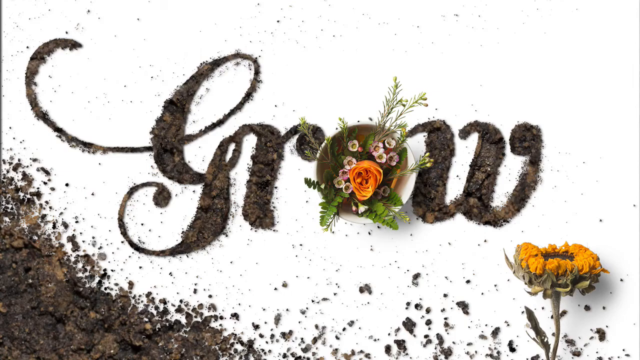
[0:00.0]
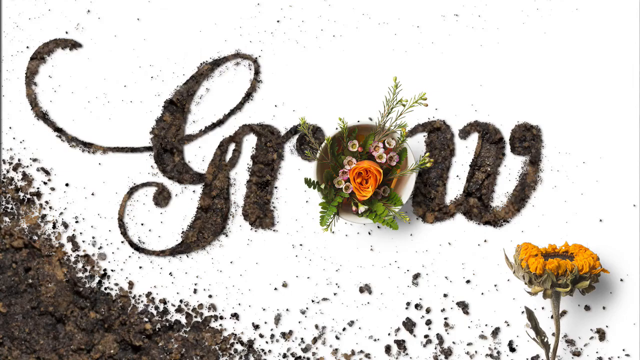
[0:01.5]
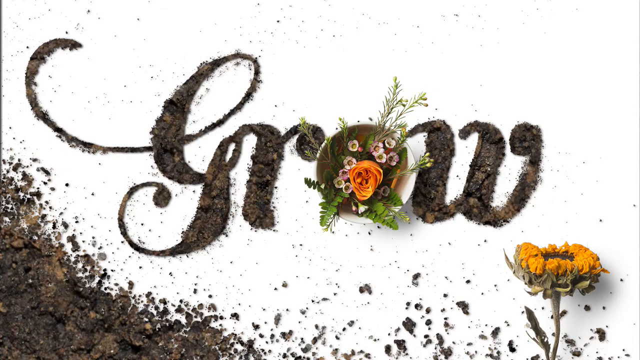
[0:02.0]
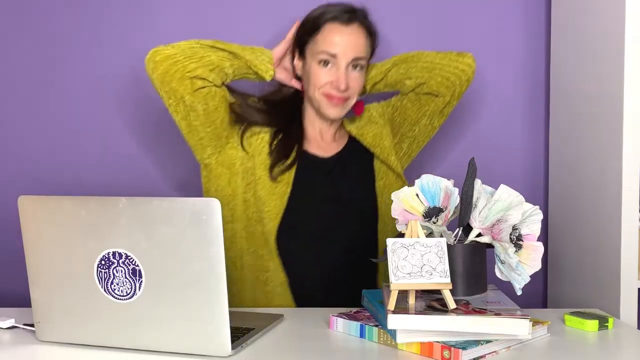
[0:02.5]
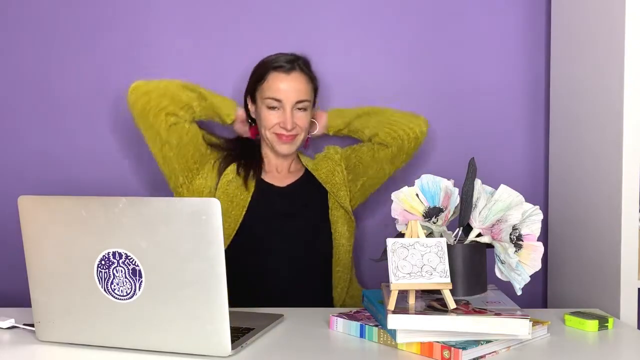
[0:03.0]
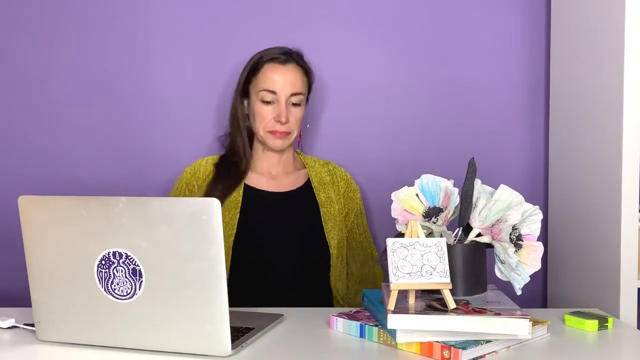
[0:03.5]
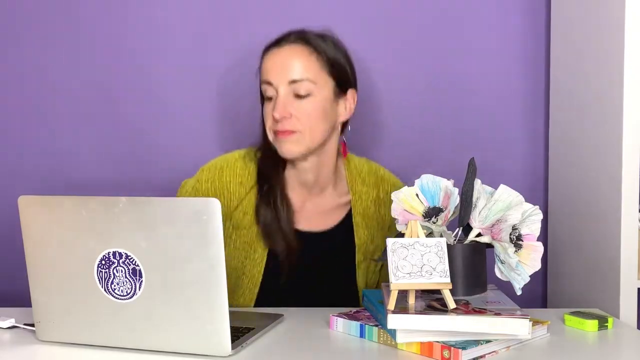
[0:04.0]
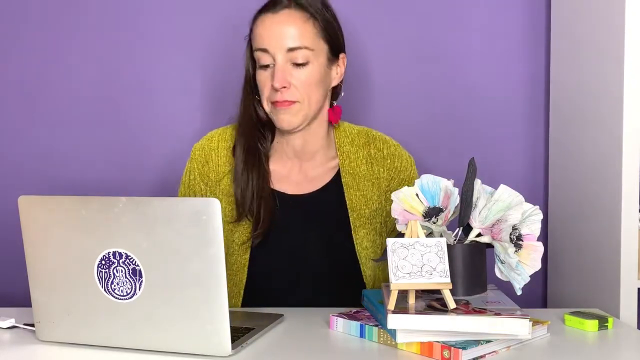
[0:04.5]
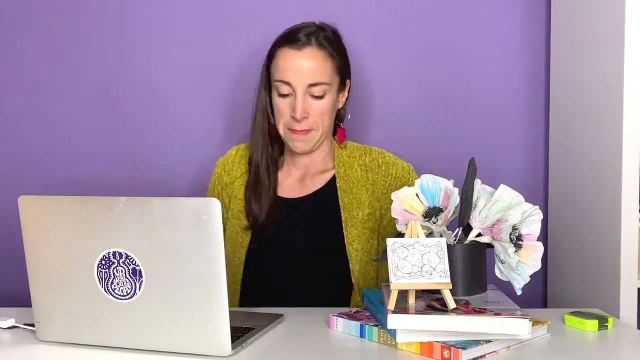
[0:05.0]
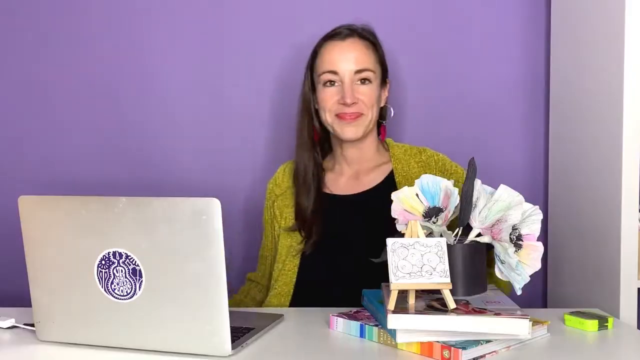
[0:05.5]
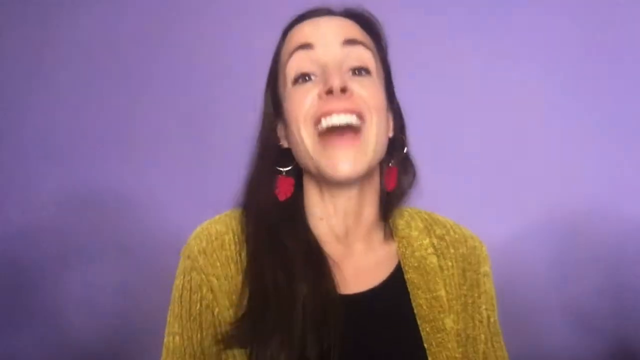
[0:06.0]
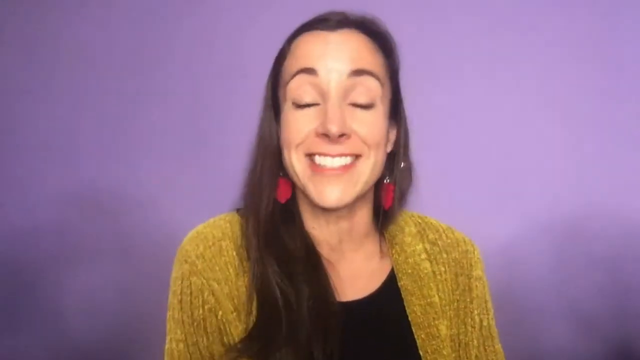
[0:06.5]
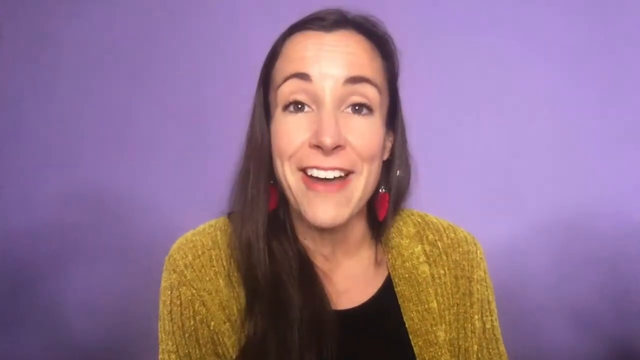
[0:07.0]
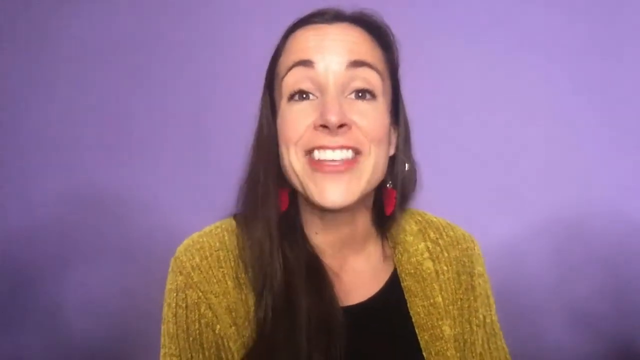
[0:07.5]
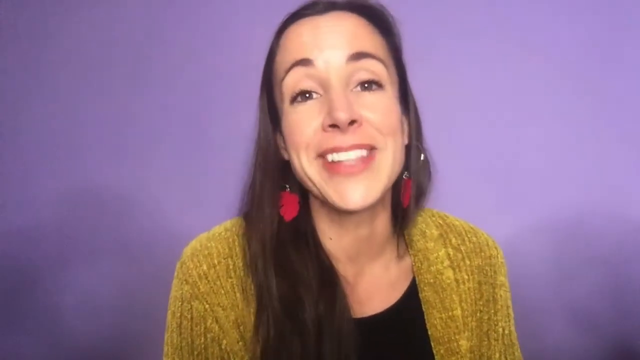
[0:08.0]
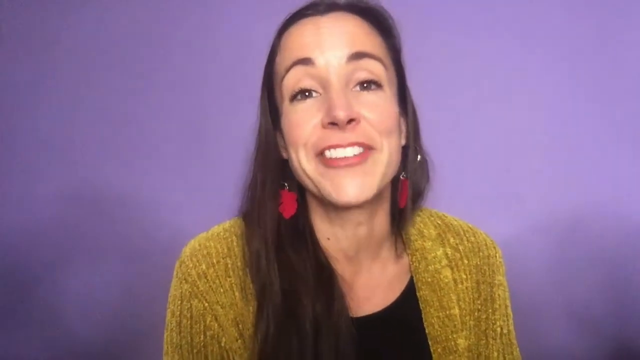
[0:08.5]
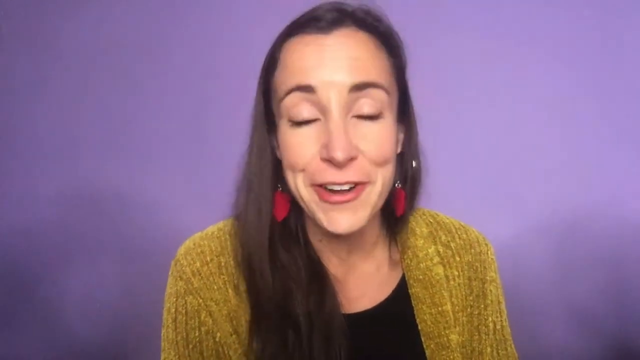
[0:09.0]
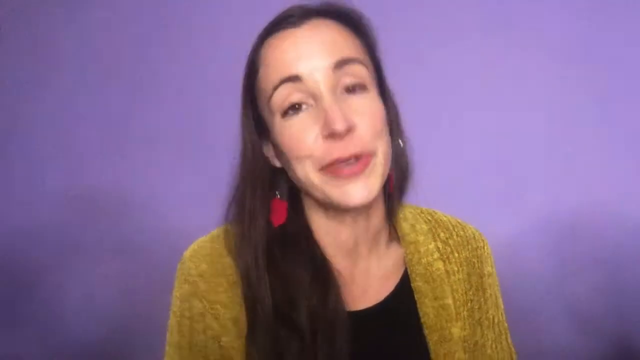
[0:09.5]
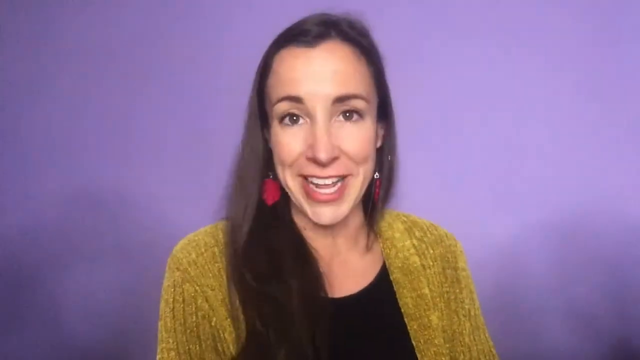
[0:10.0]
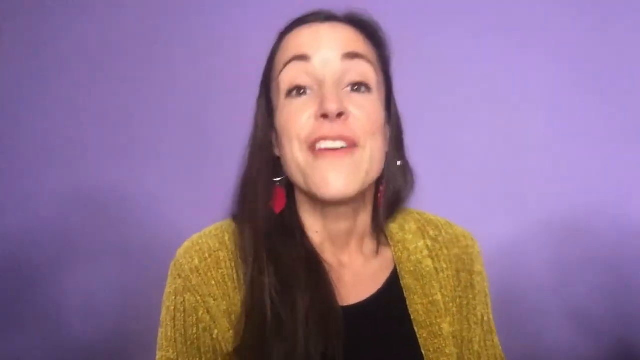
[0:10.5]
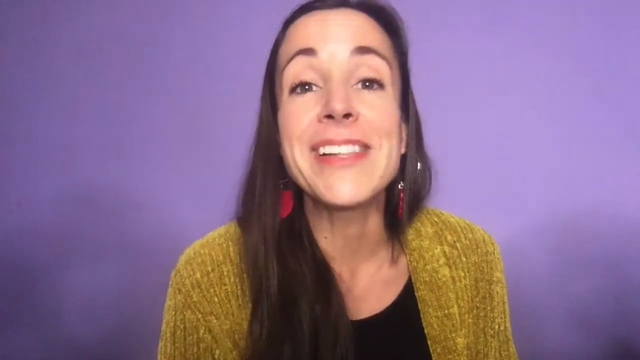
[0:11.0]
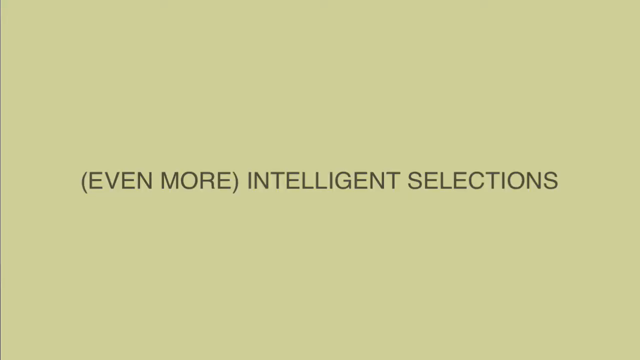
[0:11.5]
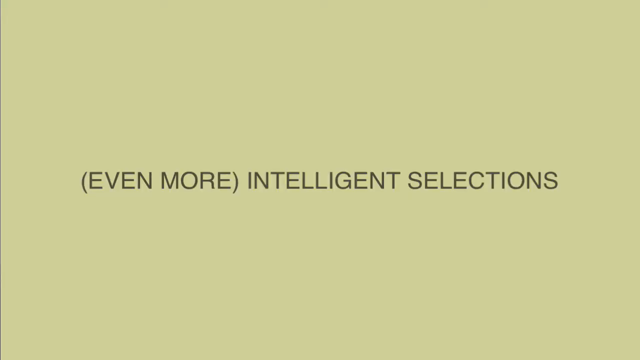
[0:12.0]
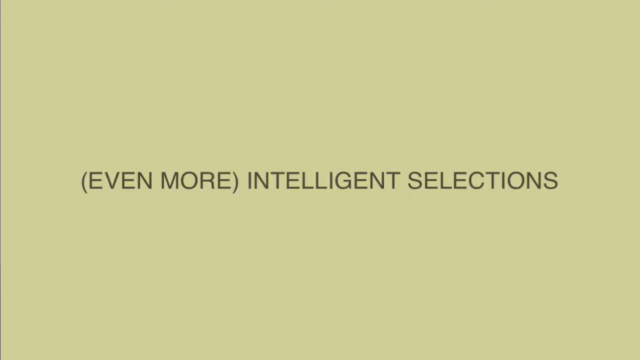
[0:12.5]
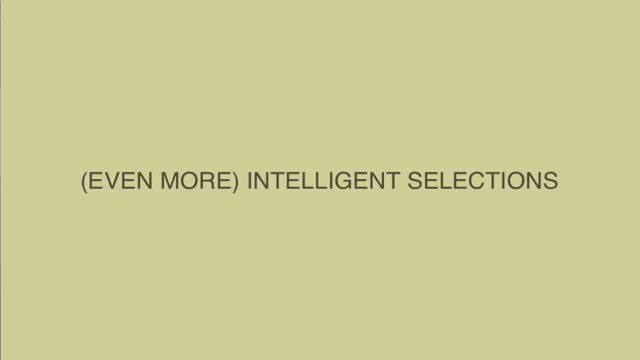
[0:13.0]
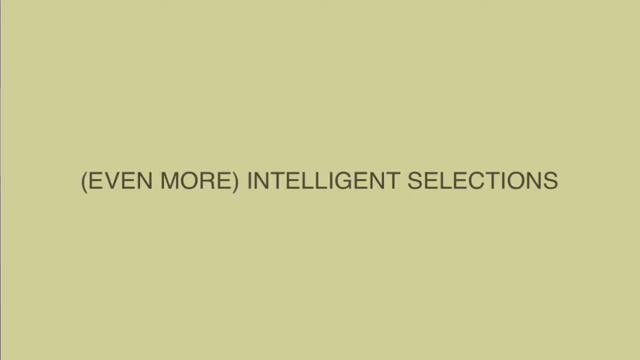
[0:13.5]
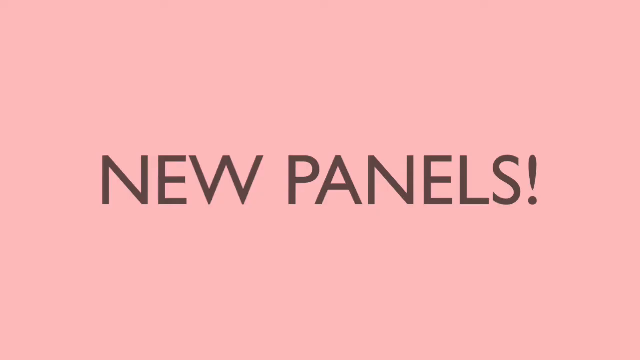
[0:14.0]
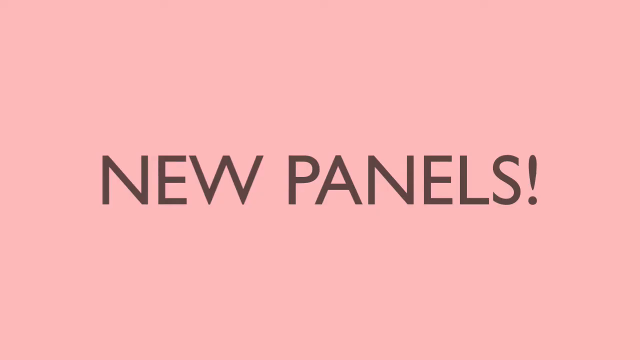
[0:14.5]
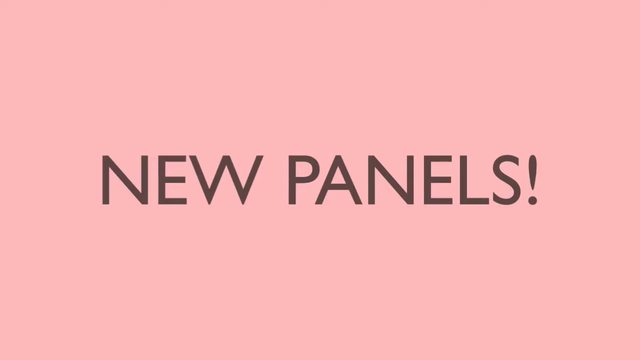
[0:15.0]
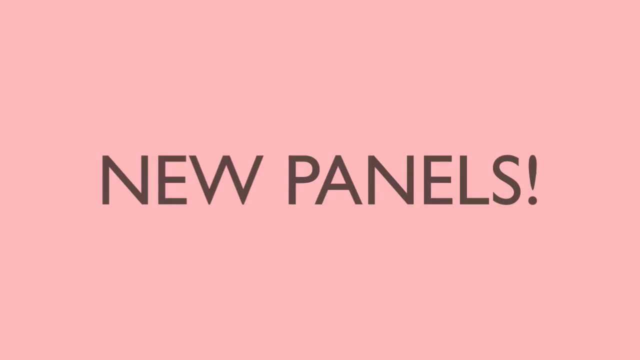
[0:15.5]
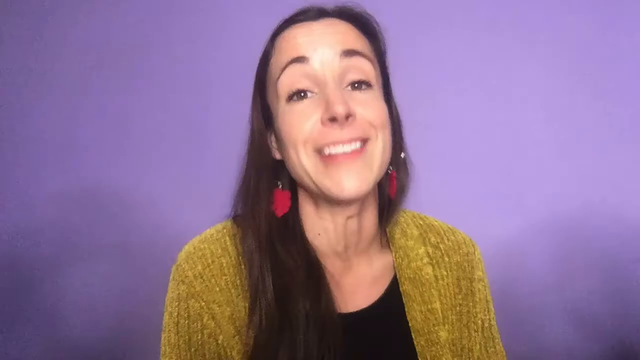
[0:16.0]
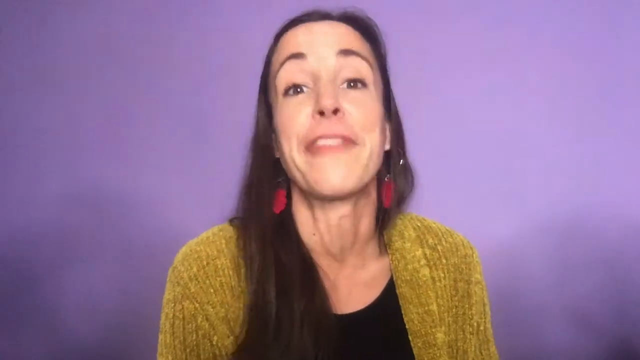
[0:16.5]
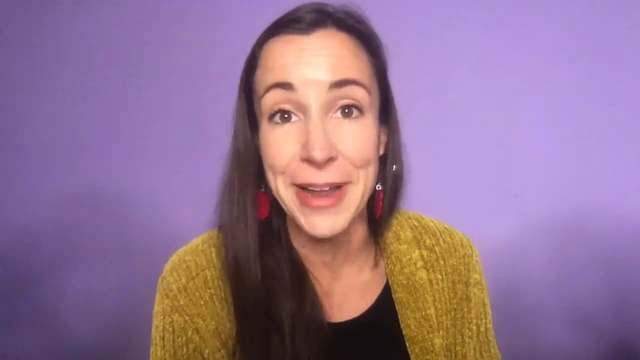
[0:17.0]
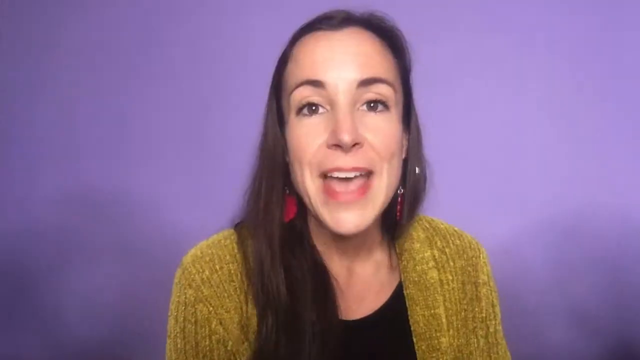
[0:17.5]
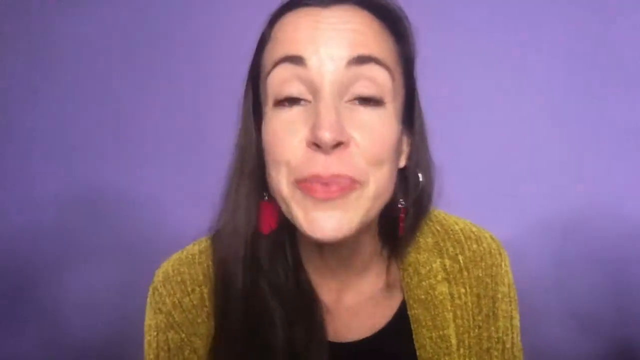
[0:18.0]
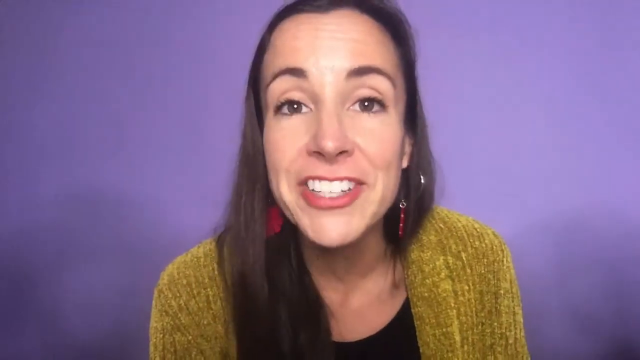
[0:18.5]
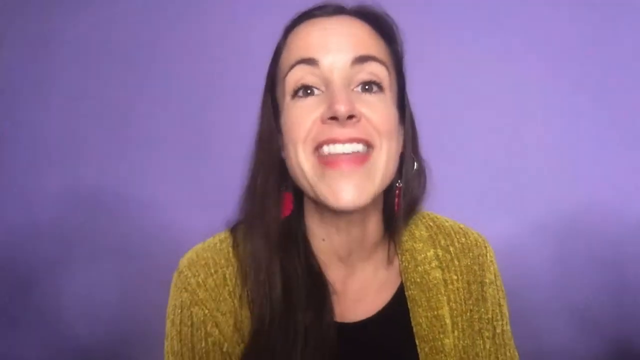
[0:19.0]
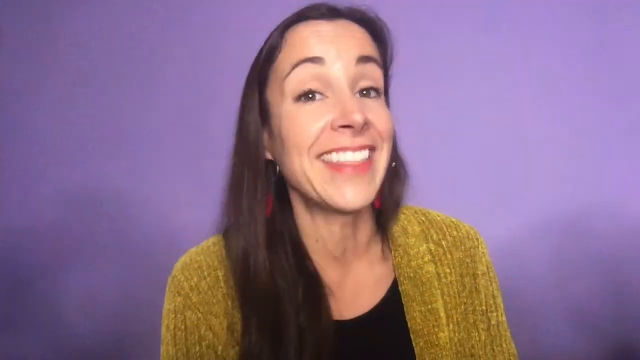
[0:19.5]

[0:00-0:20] A woman in a long black dress appears on screen. In front of her is a laptop, and there is a flower vase on top of a table that looks to be in front of her. The background is purple and looks to be a wall. The woman is then seen talking, and she seems happy about what she is talking about, with the purple background behind her. Next, text reading "even more intelligent selection" appears on a yellow-like background, followed by another text reading "new panels!" The woman is then seen talking again, seemingly about the text that just appeared, and she still seems happy. Red earrings are seen in her ears.